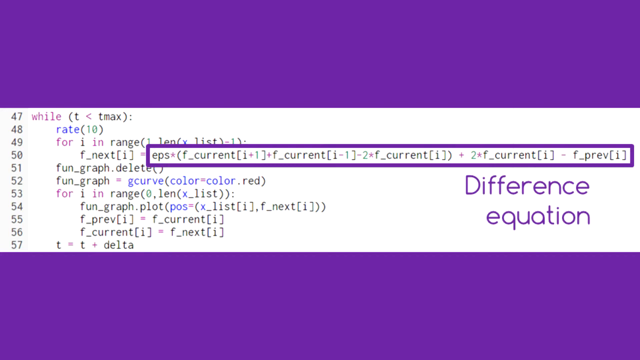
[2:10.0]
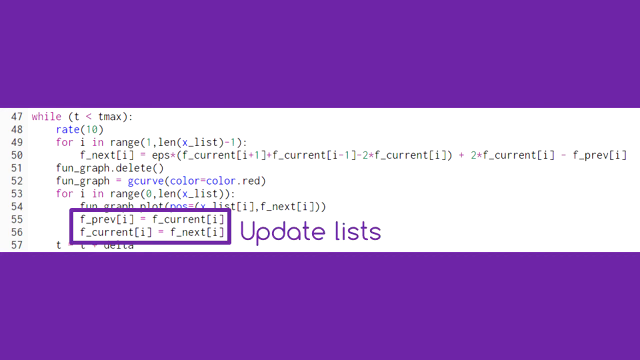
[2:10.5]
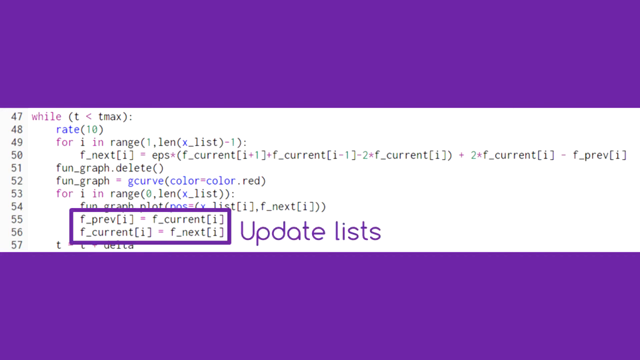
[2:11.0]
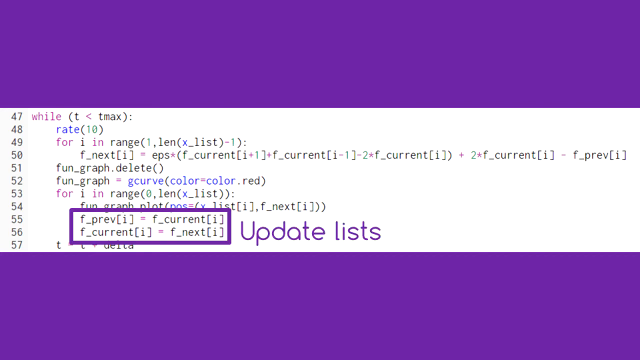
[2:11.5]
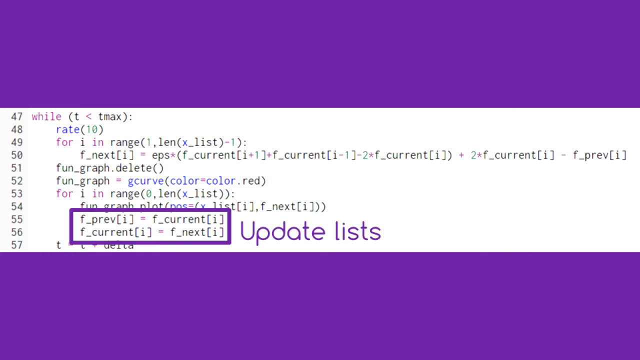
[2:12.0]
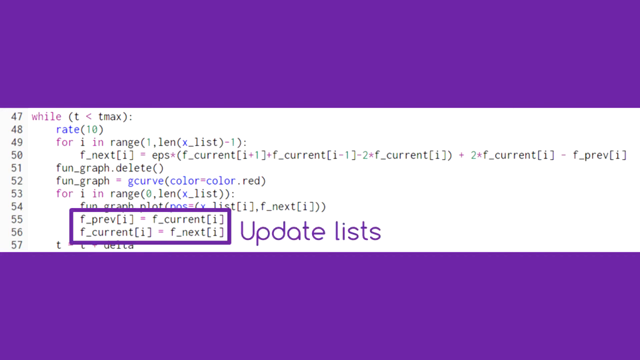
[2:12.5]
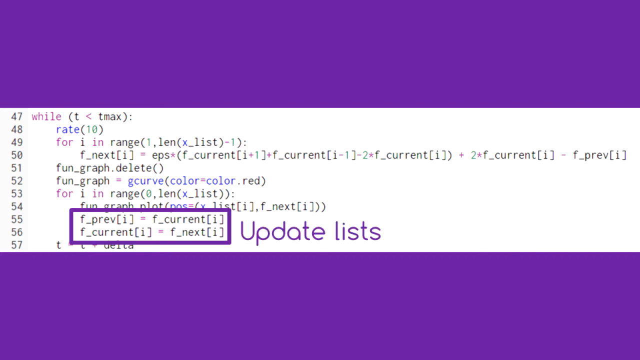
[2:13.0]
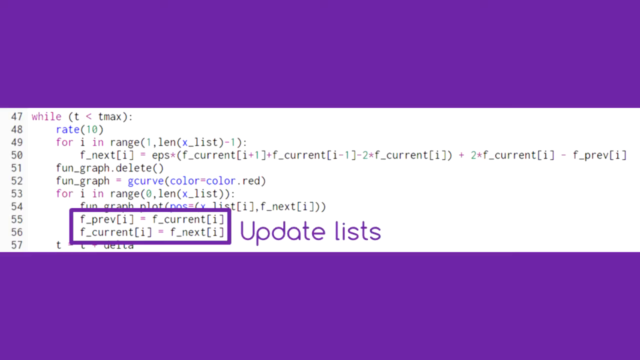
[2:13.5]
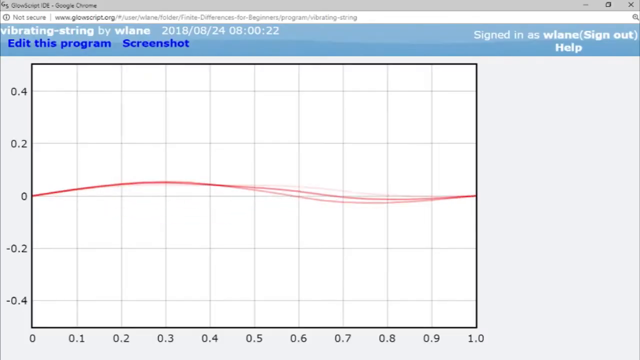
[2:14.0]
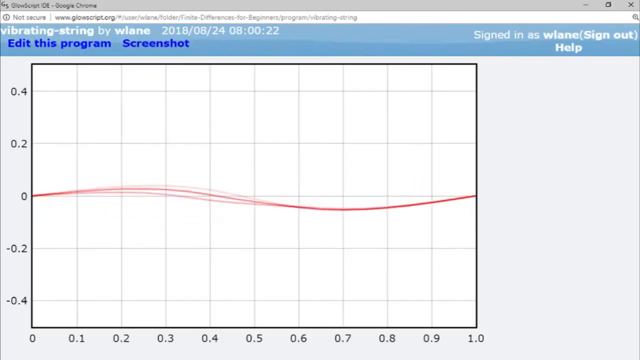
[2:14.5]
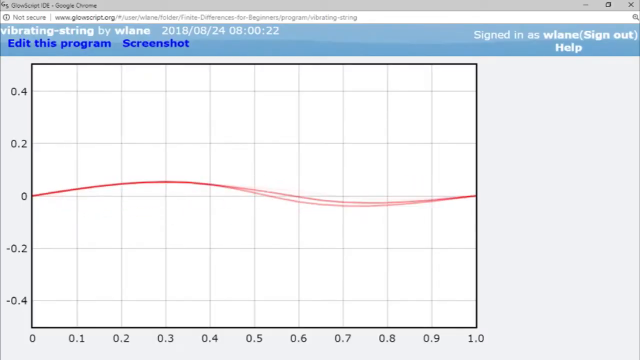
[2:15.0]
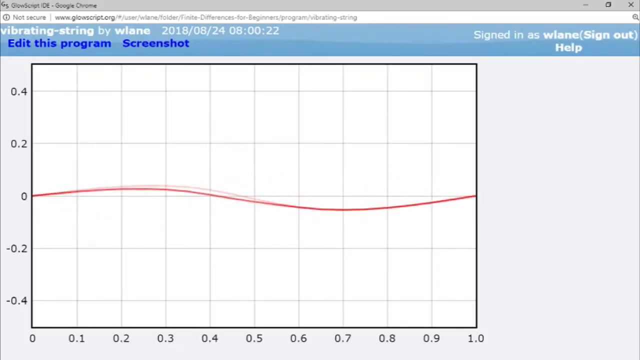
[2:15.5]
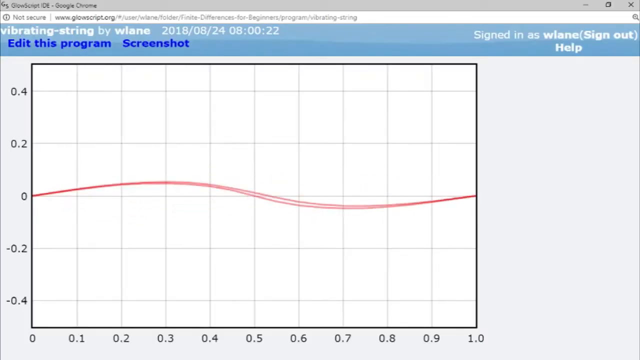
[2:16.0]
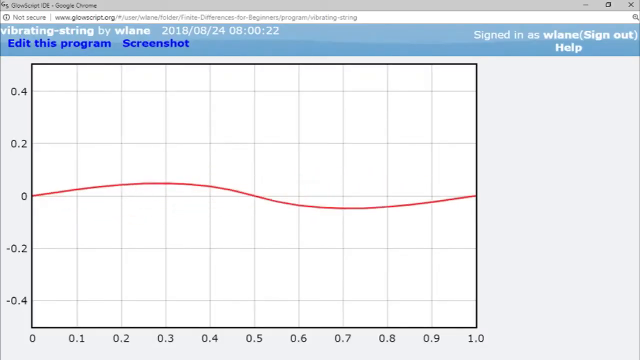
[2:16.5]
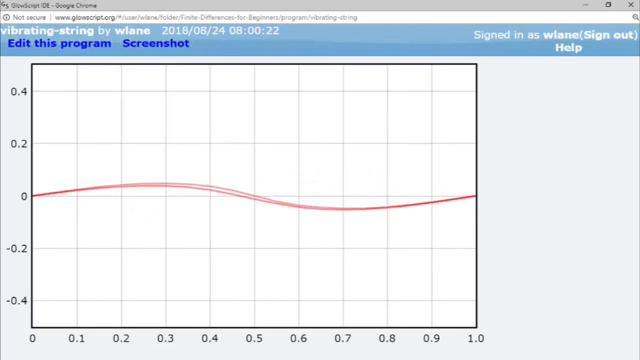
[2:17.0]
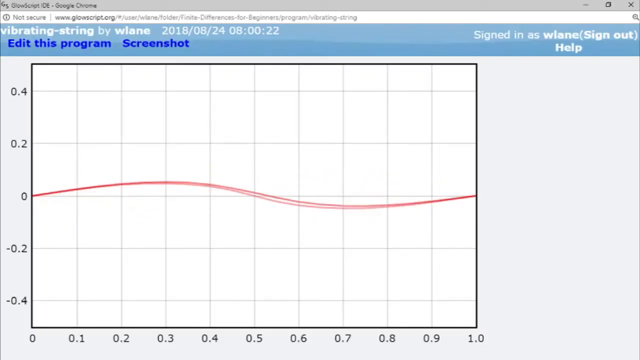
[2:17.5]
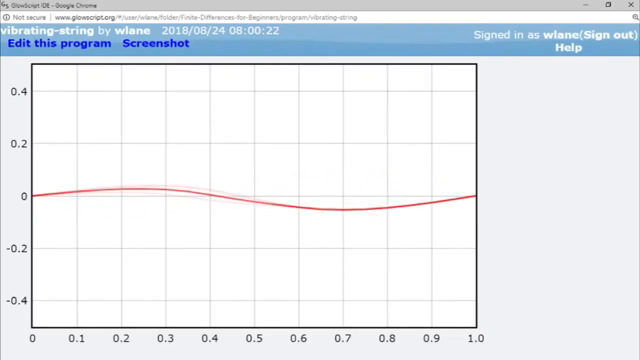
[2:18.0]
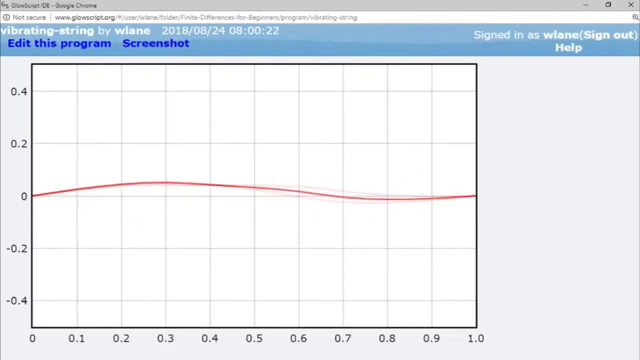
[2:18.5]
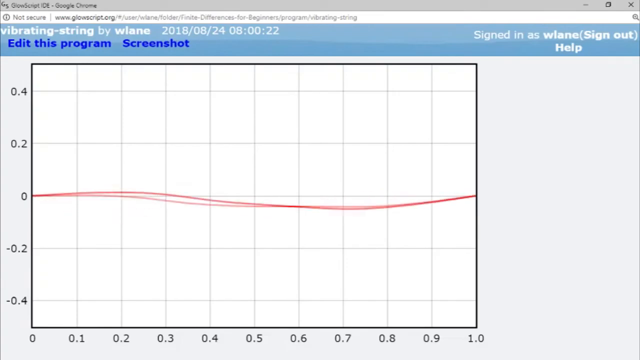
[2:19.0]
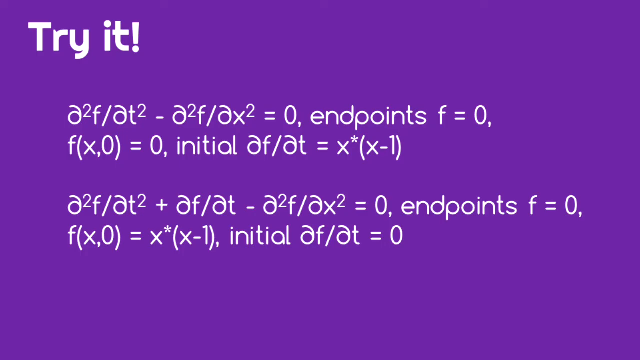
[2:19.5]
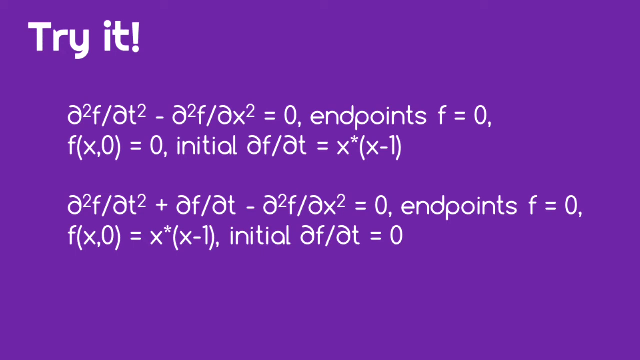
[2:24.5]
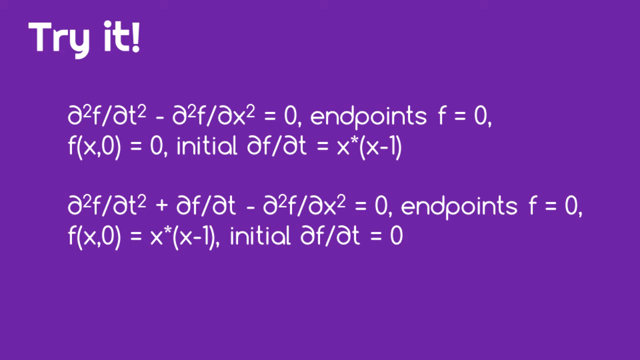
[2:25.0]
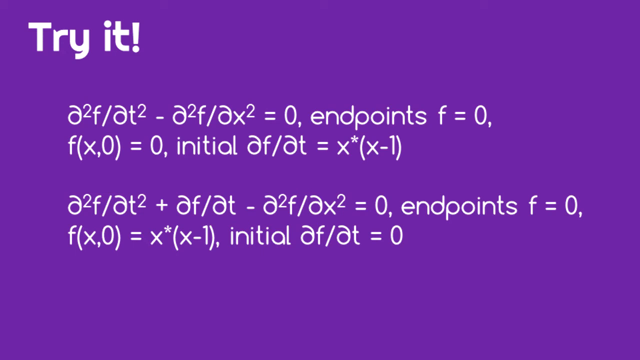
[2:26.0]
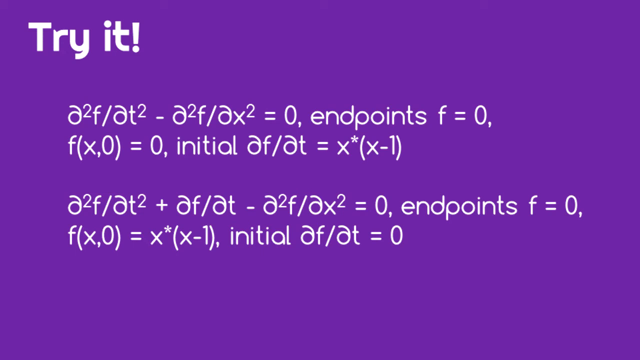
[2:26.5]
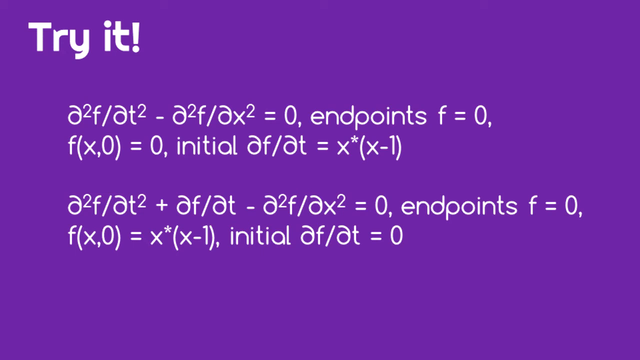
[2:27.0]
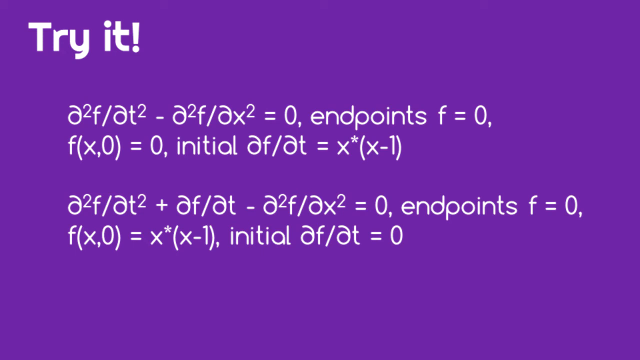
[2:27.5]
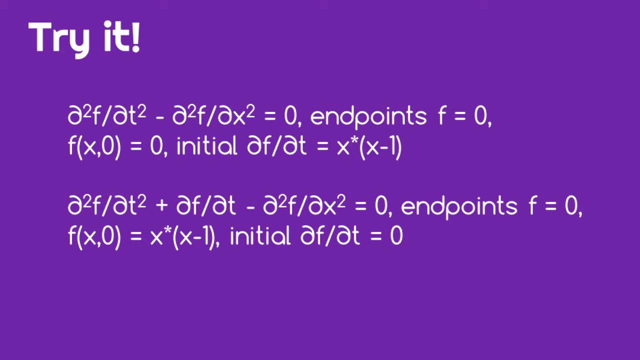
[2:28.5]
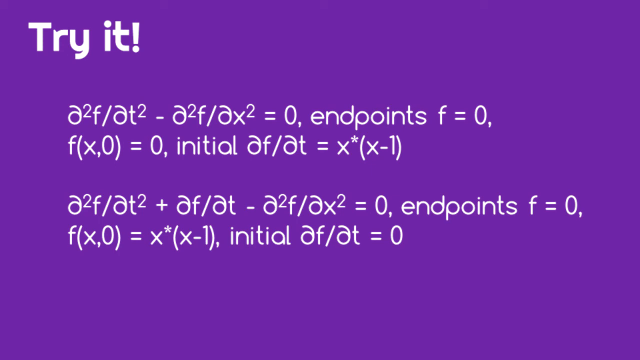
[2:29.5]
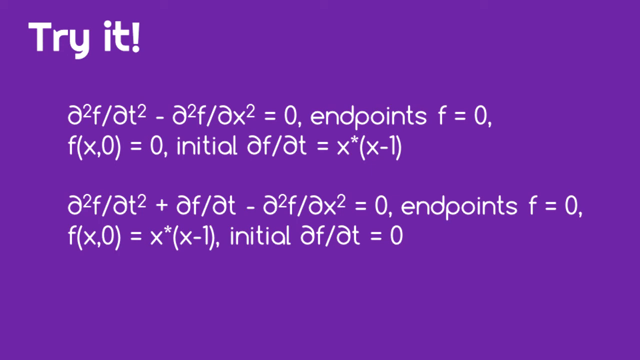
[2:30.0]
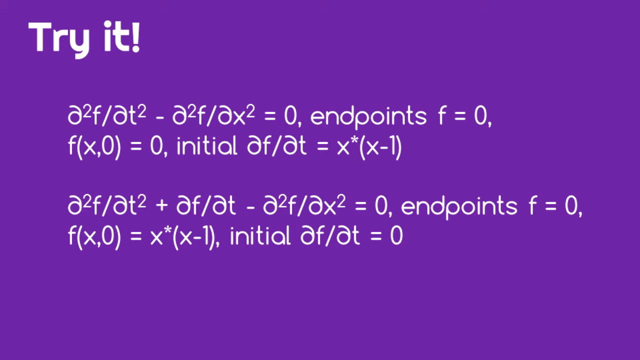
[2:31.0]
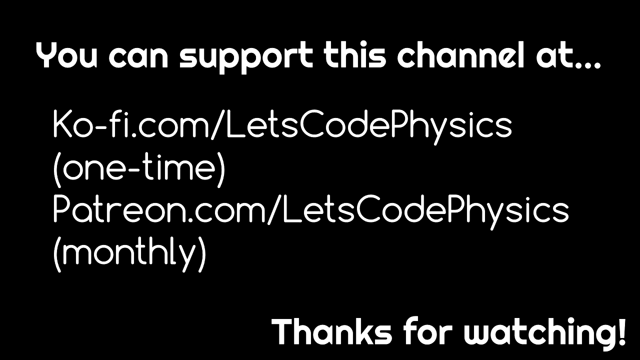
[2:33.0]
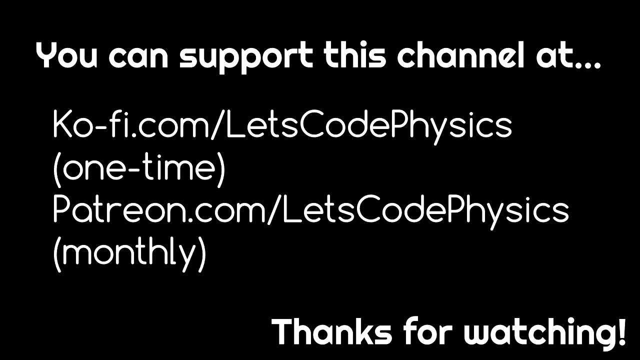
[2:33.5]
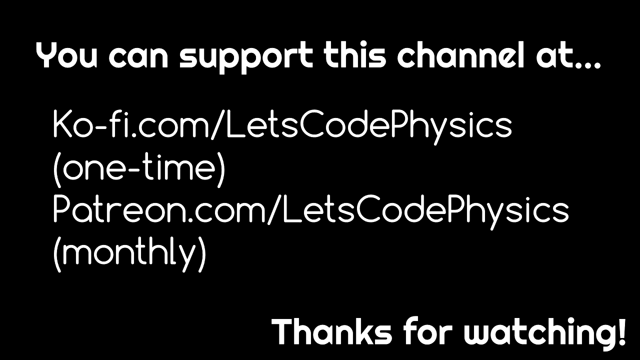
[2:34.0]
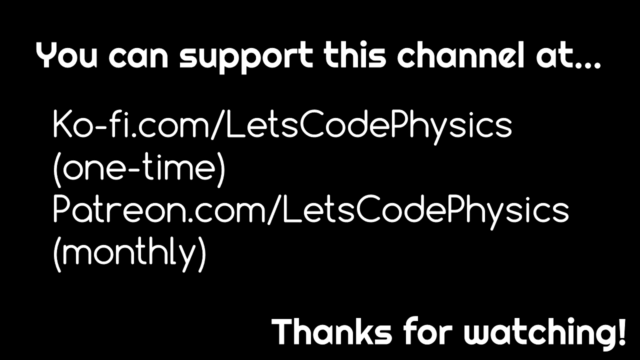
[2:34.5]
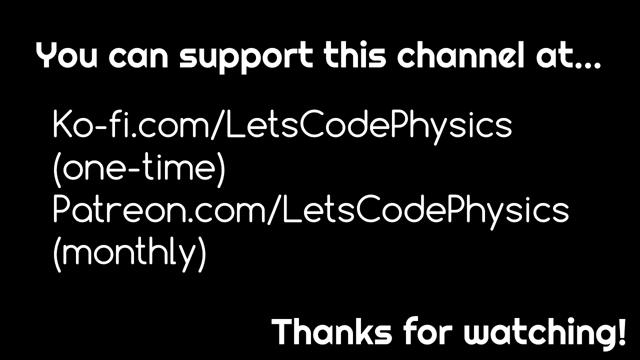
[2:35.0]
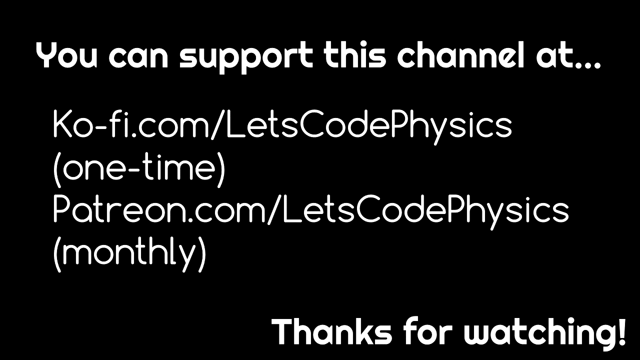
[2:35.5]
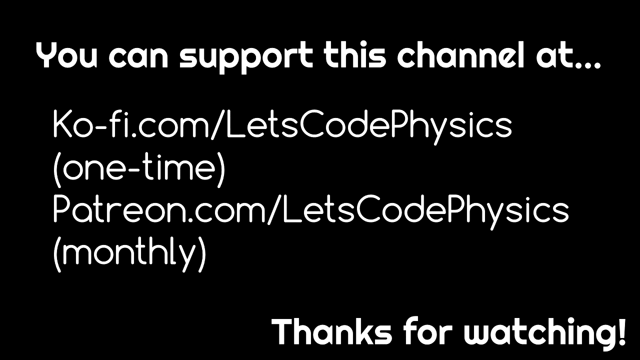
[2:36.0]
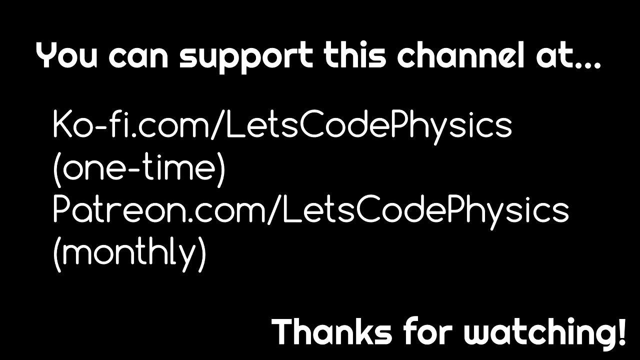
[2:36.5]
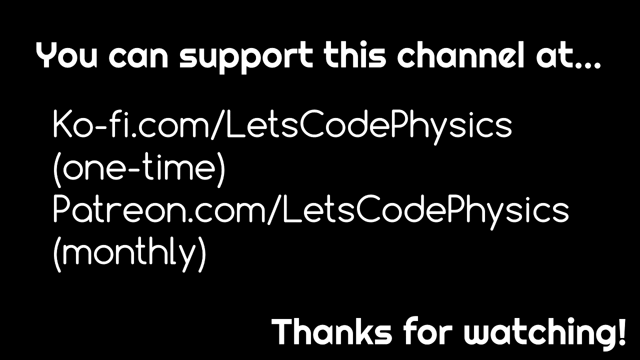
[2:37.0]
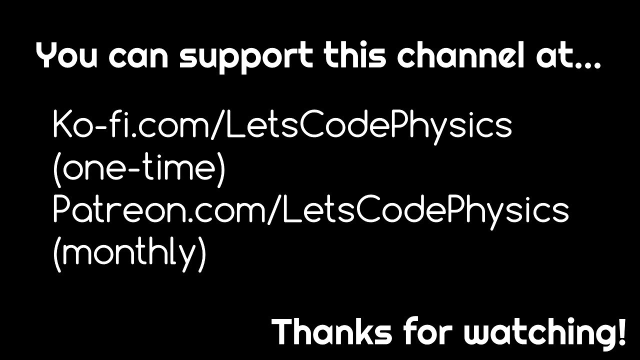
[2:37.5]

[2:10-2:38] The video shows loop over times, with different lists and slopes. A graph with moving waves appears, and then different equations with "try it." The ending shows the result of all the steps that were worked through.